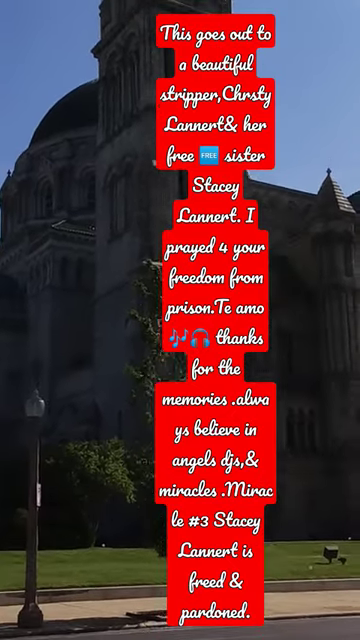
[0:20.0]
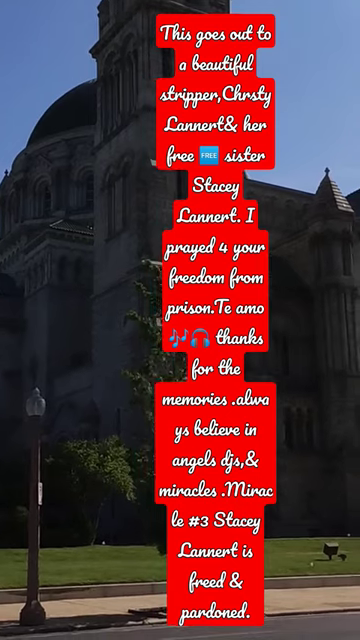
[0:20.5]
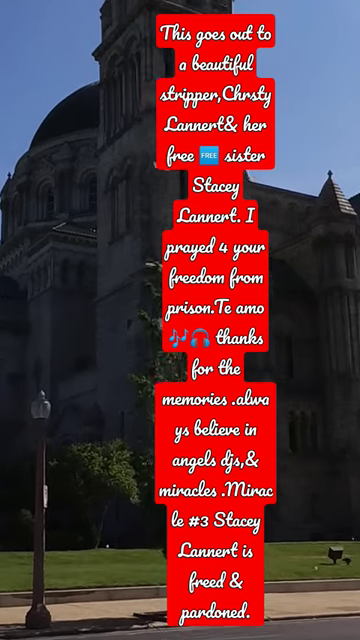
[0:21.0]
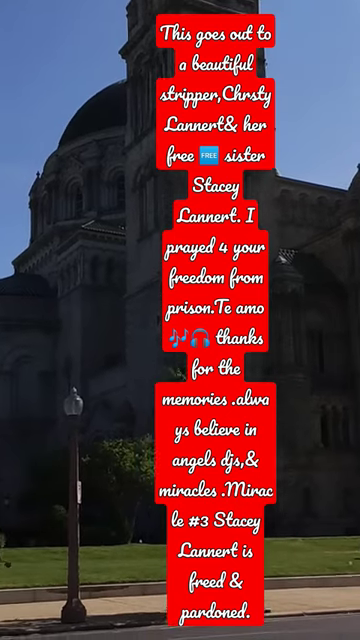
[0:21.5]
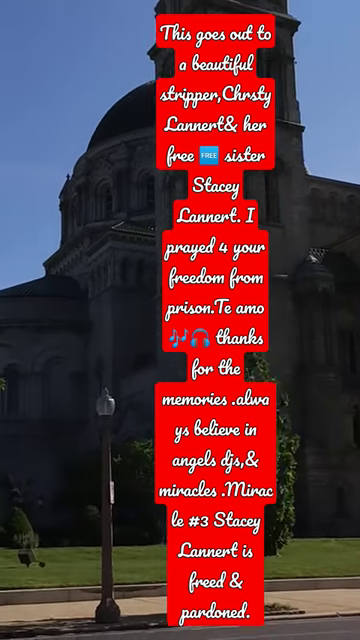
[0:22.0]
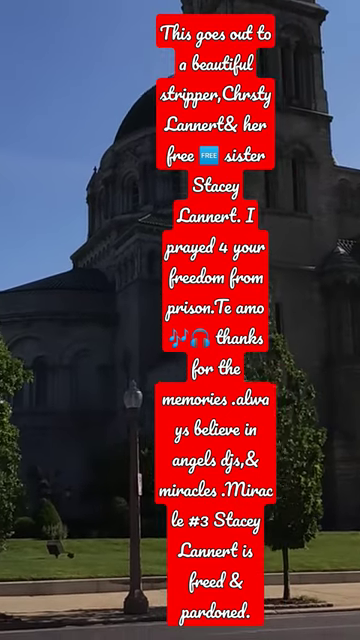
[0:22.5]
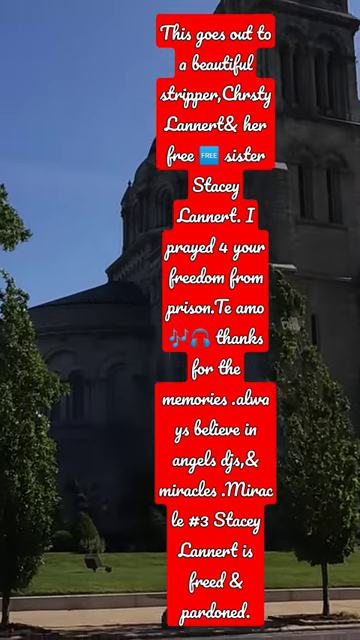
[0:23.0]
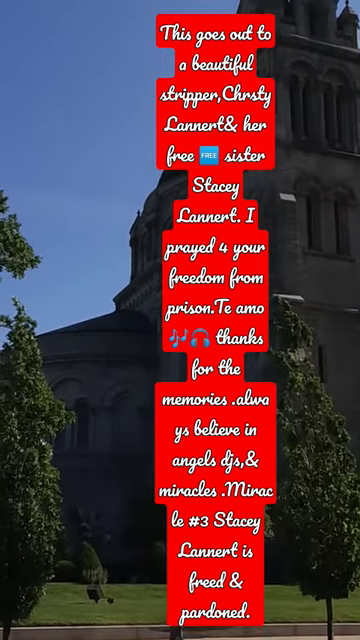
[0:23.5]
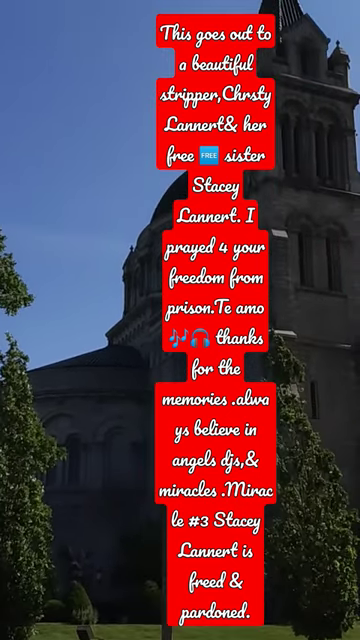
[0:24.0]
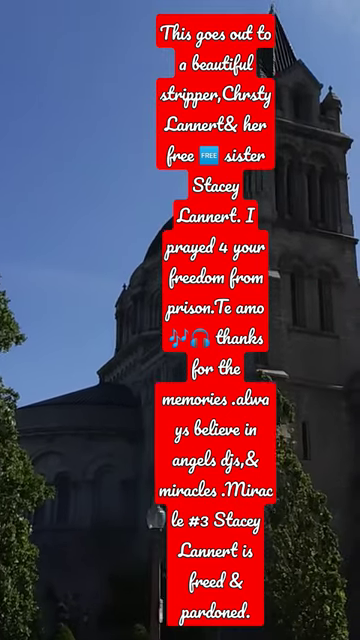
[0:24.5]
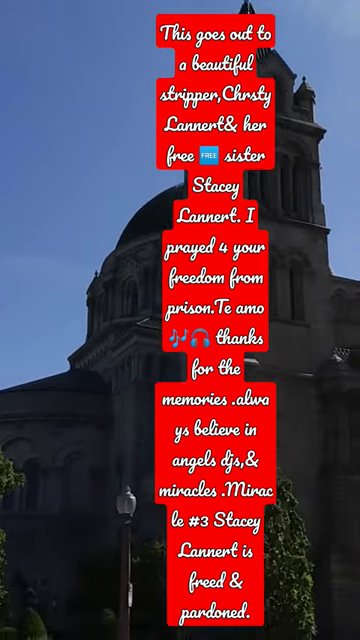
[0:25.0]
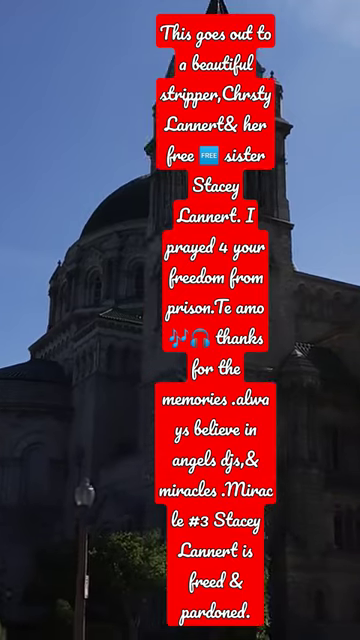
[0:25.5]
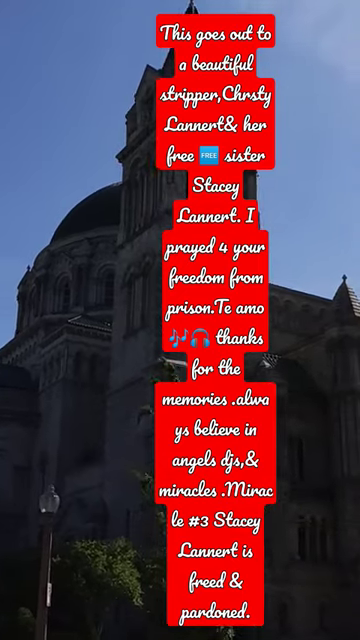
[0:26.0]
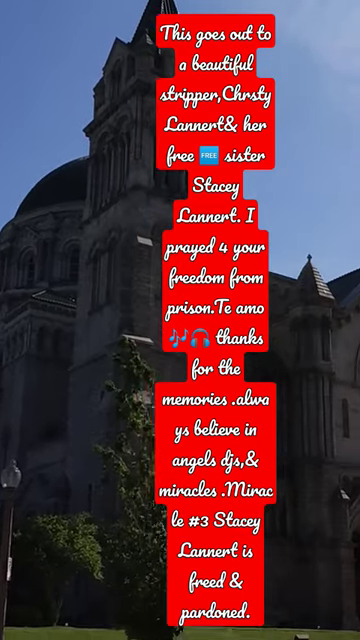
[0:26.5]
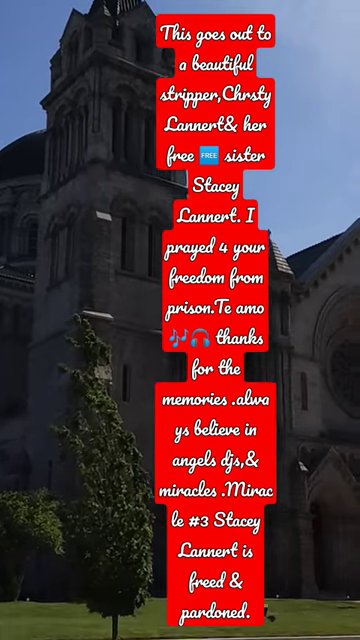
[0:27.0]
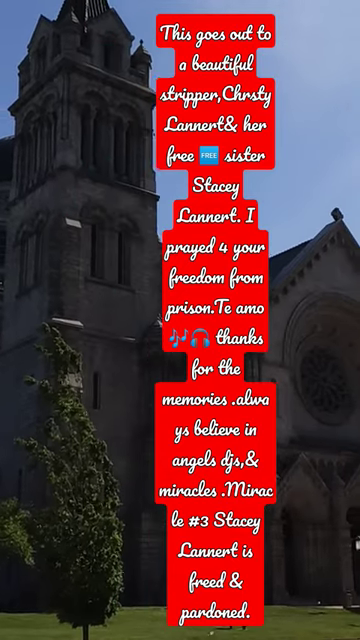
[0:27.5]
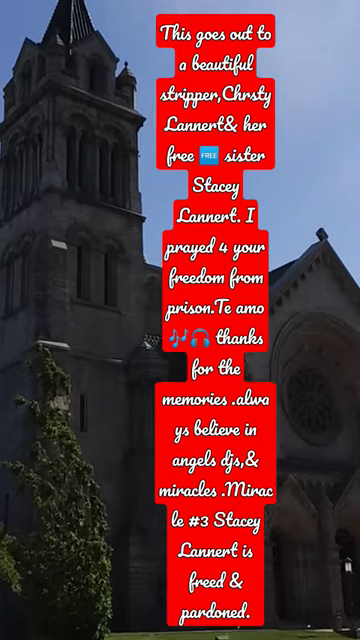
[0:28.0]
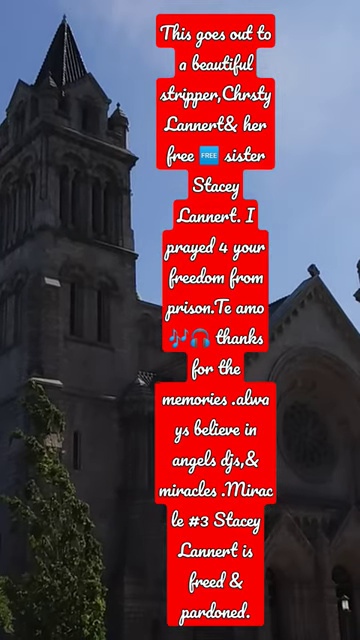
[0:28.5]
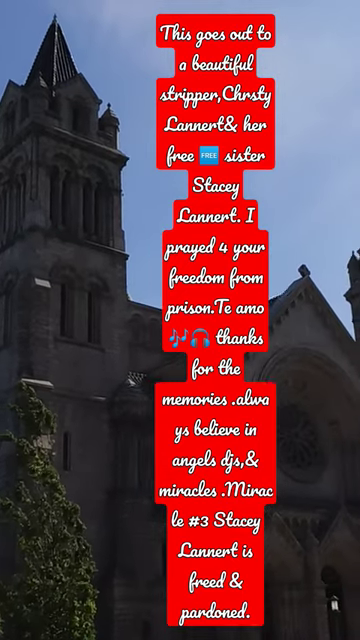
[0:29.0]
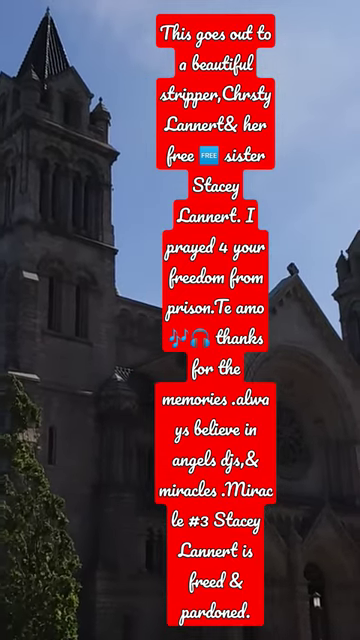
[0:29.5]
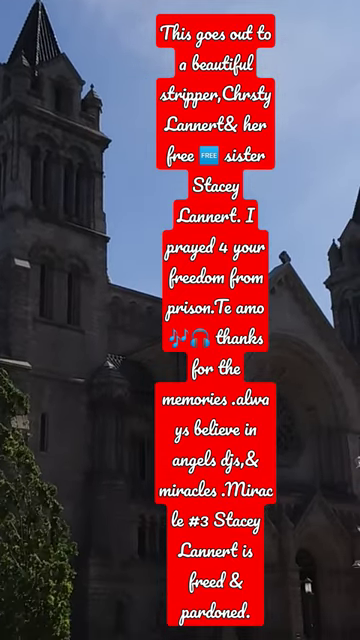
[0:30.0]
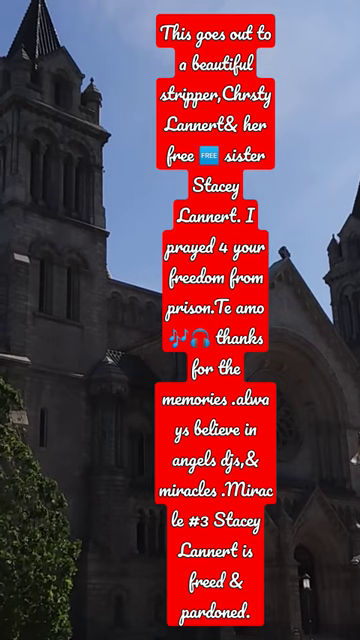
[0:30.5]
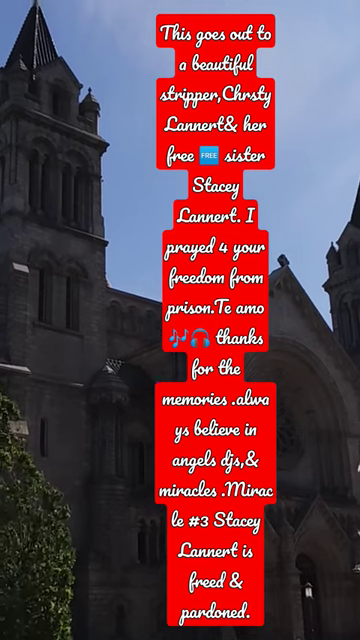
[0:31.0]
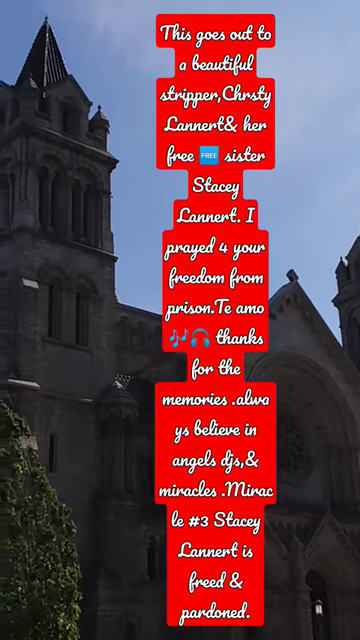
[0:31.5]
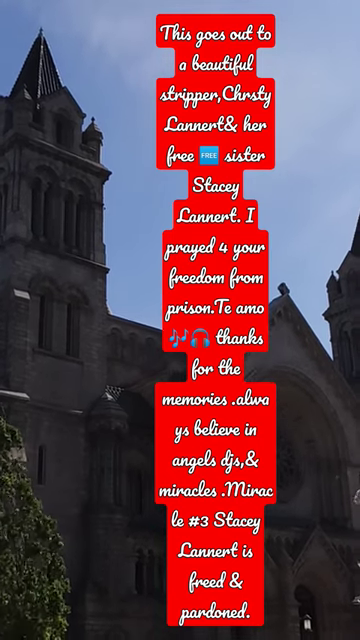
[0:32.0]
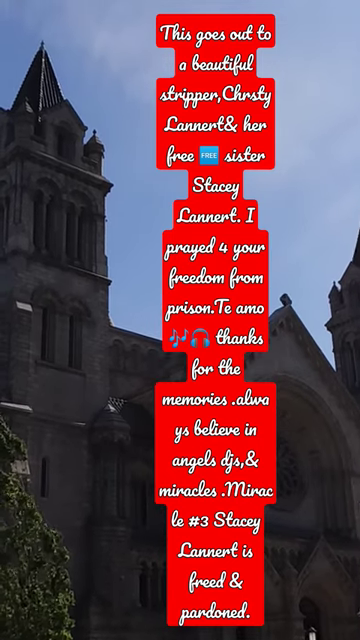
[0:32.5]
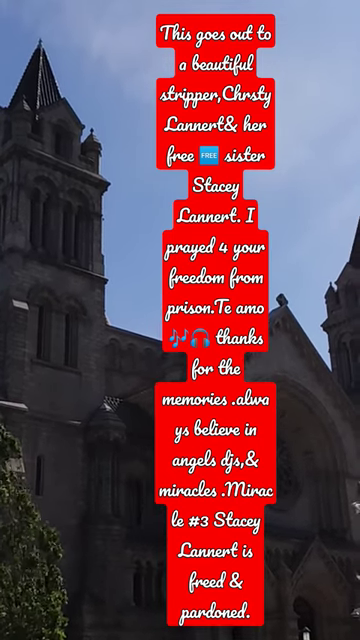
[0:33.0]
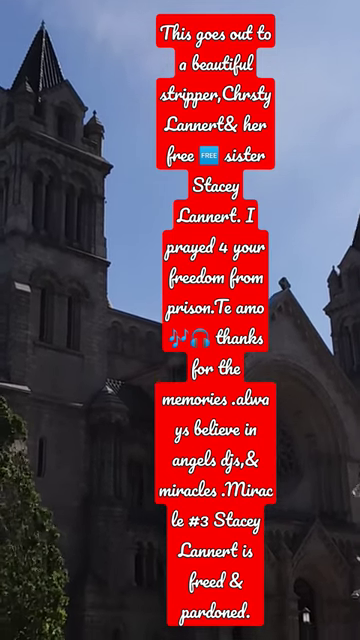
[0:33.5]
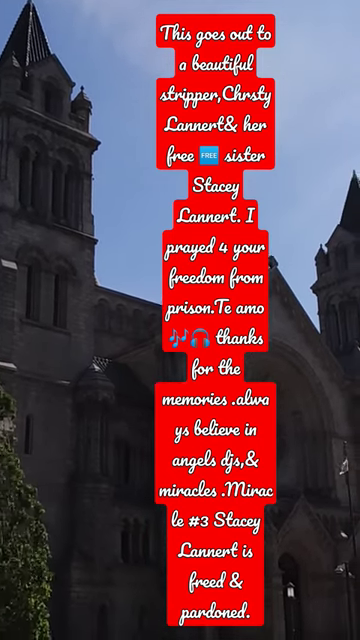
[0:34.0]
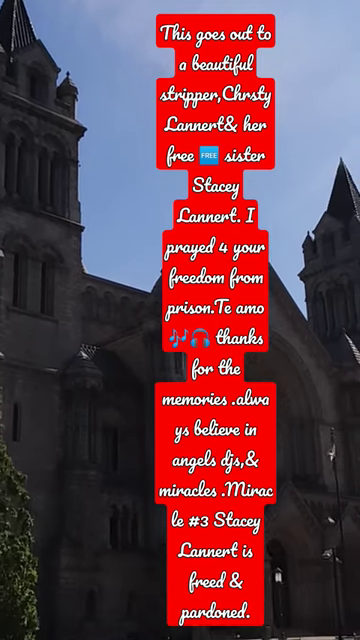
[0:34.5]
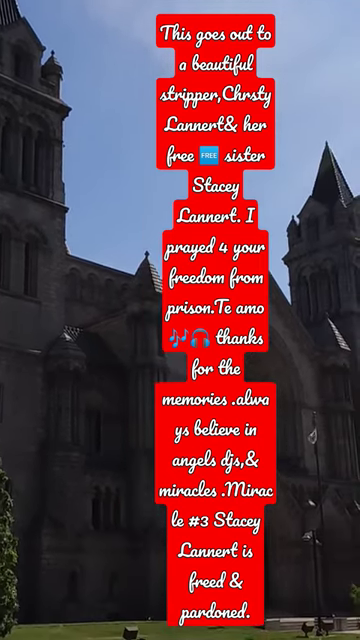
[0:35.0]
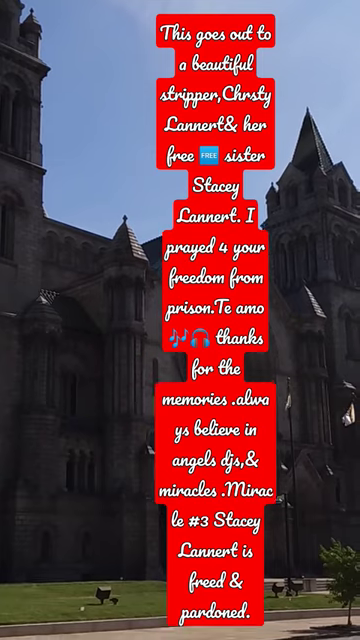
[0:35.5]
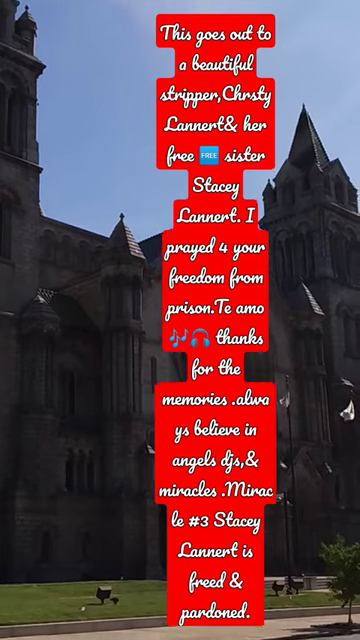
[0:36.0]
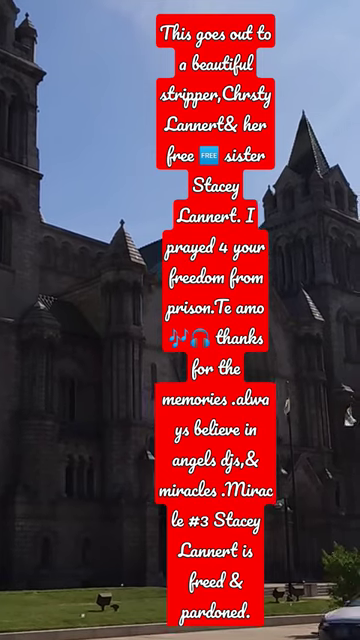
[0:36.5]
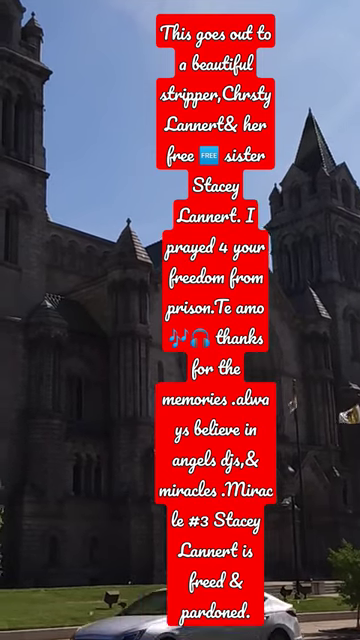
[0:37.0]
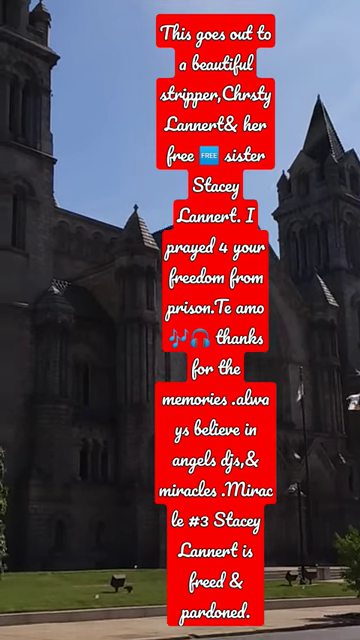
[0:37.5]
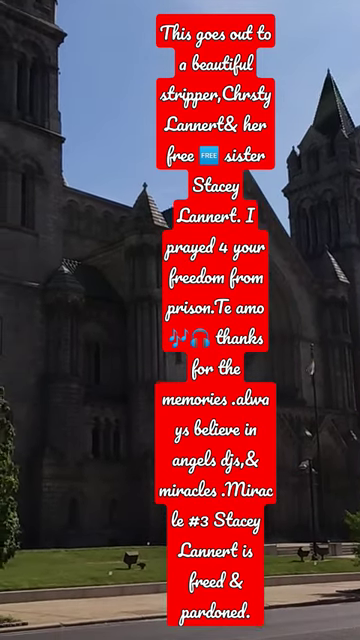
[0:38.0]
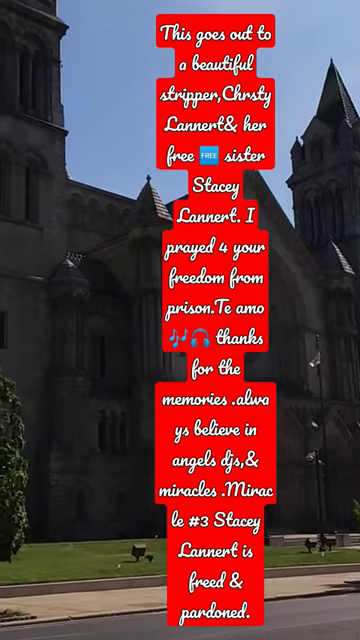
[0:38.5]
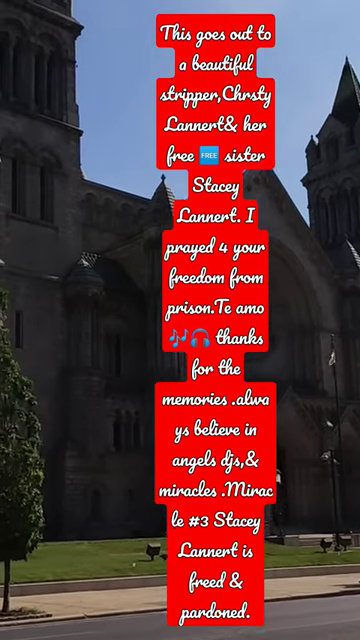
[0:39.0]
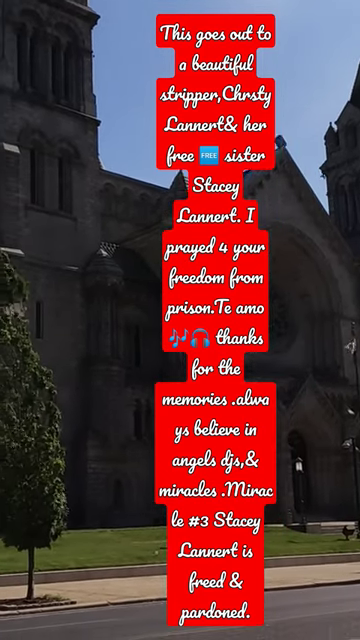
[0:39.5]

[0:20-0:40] An old church is recorded outdoors by a person holding a phone and moving it to the left and to the right. The street in front of the church and the grass are visible, with lights in the grass apparently meant to illuminate the building at night. A street lamp stands in front of the church, a car is on the street, and a car drives by. Blue sky is in the background. The church has four or five stories and looks very medieval, with a hexagonal roof, a hemispherical dome roof, and many open areas where the windows are just openings. Overlaying the image is a message with a red background and white cursive lettering that reads: "This goes out to a beautiful stripper, Christy Lannert and her free sister, Stacy Lannert. I prayed for your freedom from prison. Te amo. Thanks for the memories. Always believe in angels, DJs, and miracles. Miracle number three, Stacy Lannert is freed and pardoned."